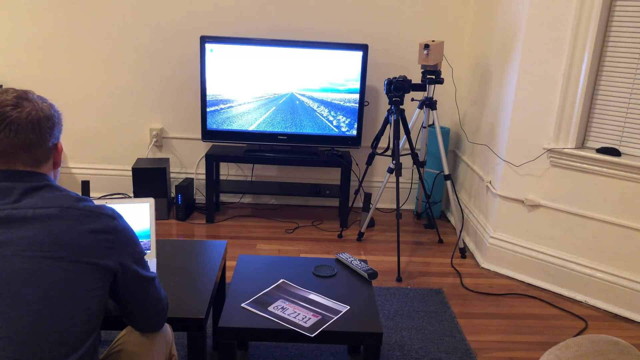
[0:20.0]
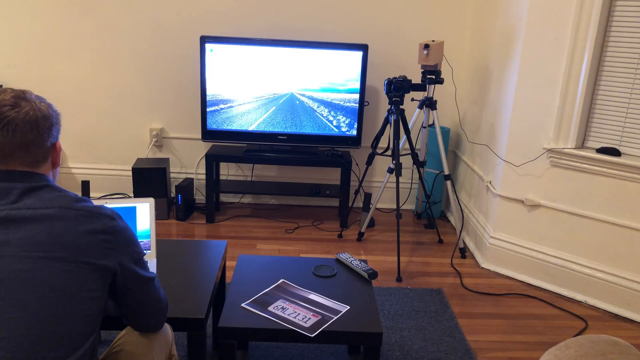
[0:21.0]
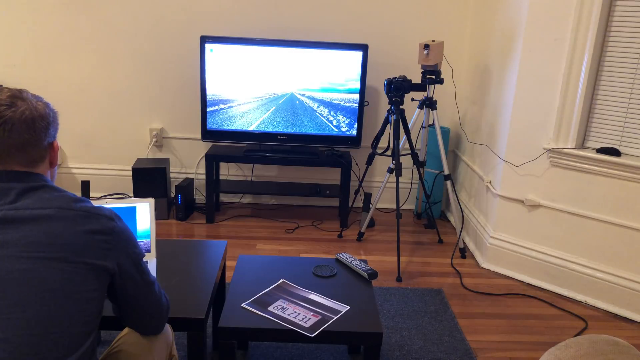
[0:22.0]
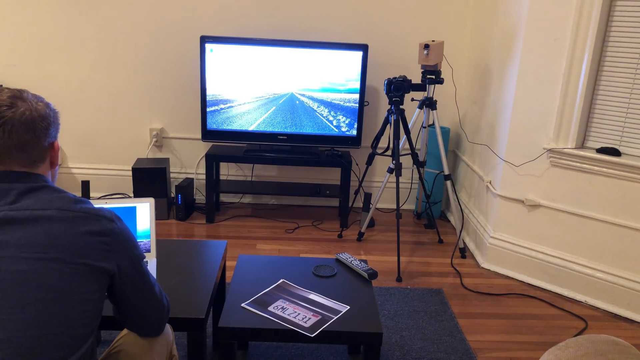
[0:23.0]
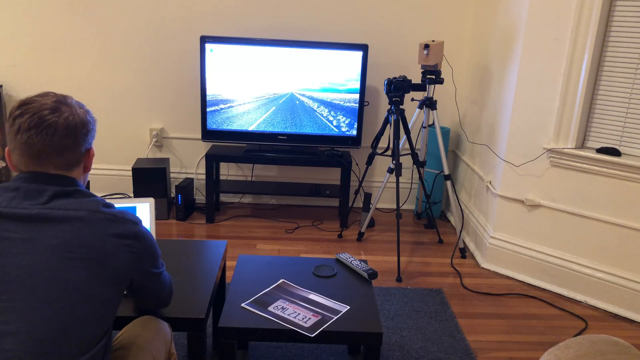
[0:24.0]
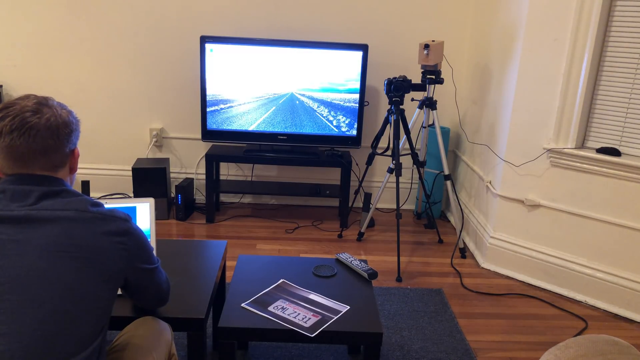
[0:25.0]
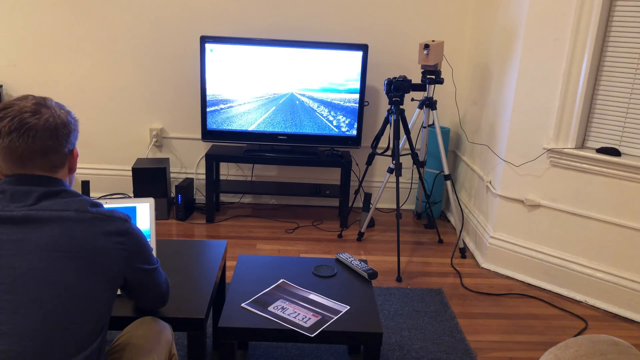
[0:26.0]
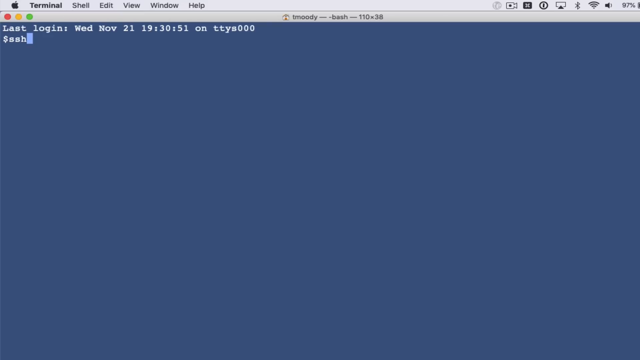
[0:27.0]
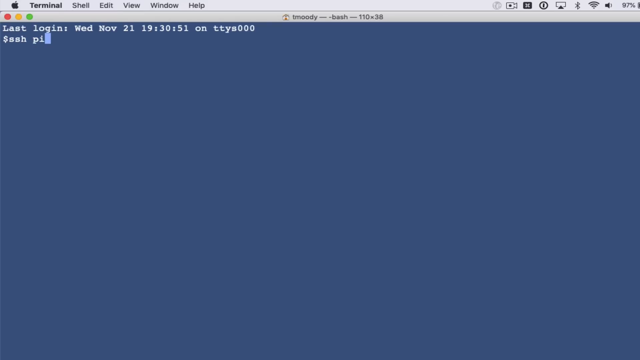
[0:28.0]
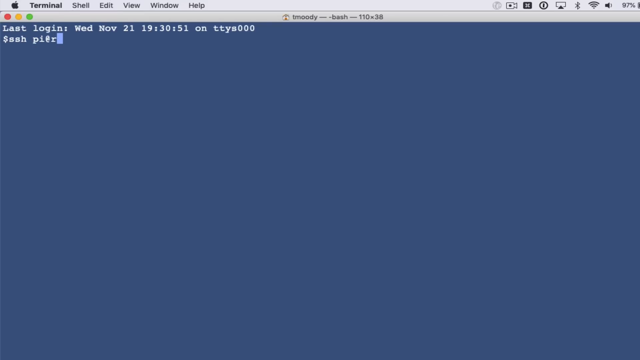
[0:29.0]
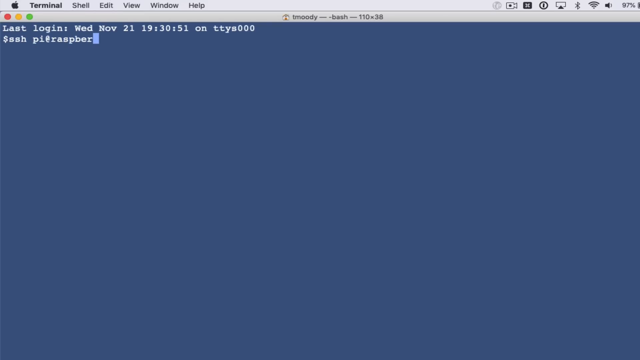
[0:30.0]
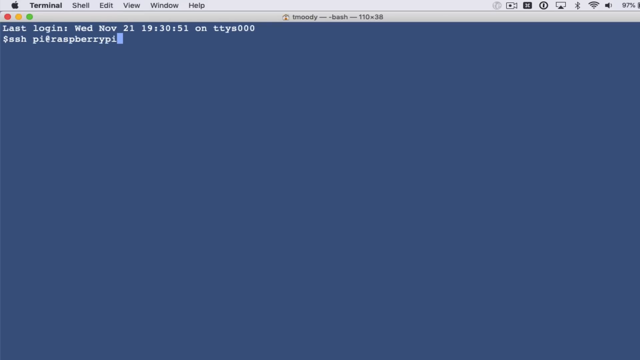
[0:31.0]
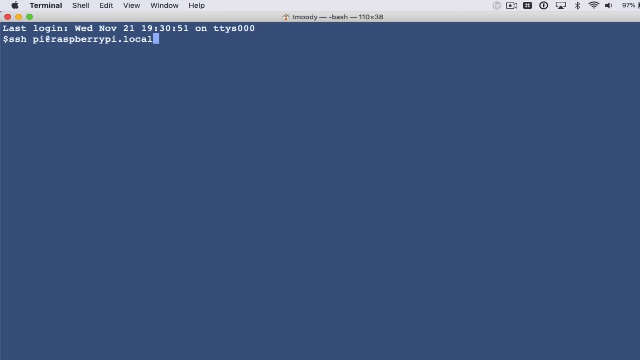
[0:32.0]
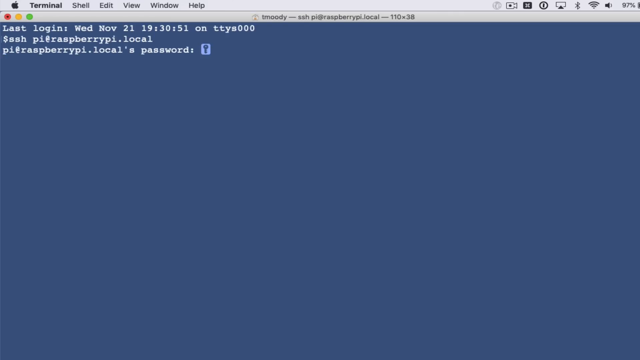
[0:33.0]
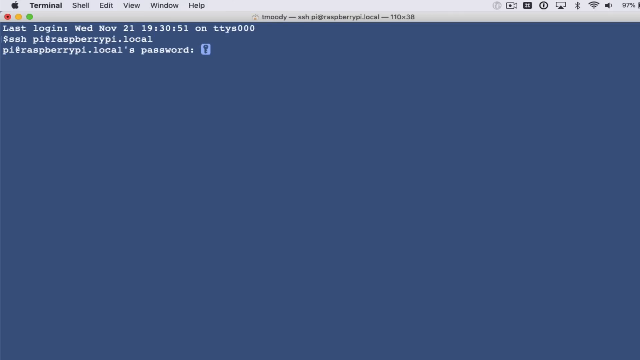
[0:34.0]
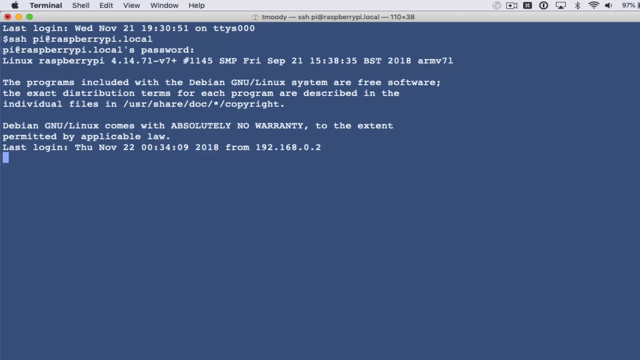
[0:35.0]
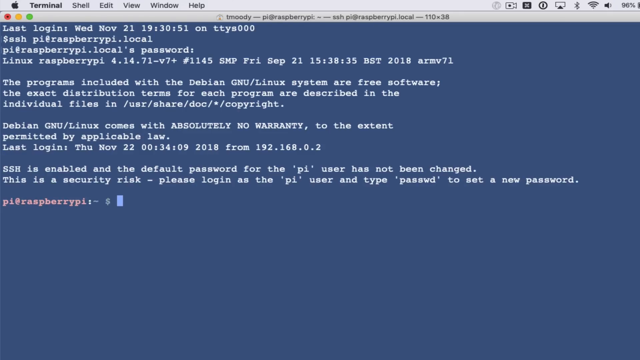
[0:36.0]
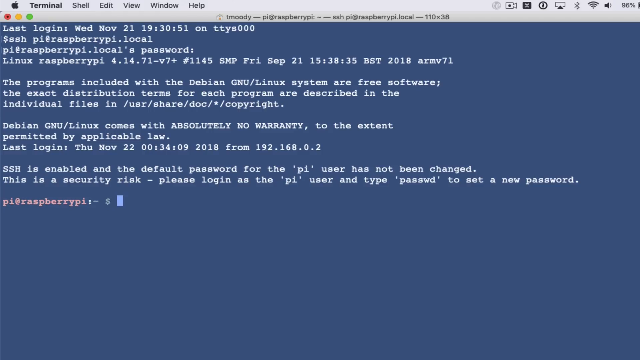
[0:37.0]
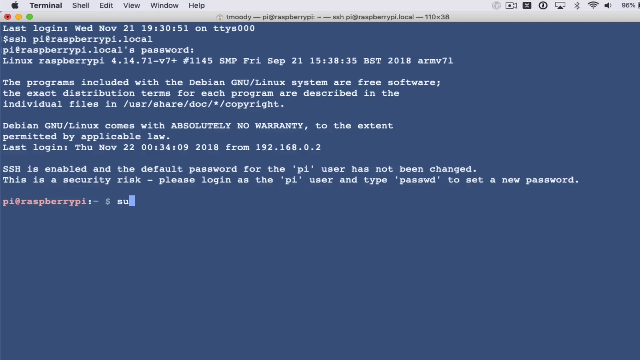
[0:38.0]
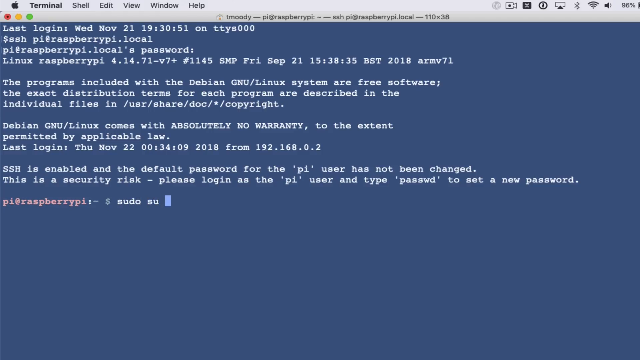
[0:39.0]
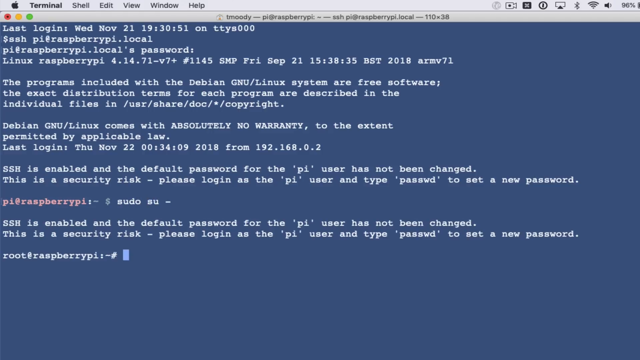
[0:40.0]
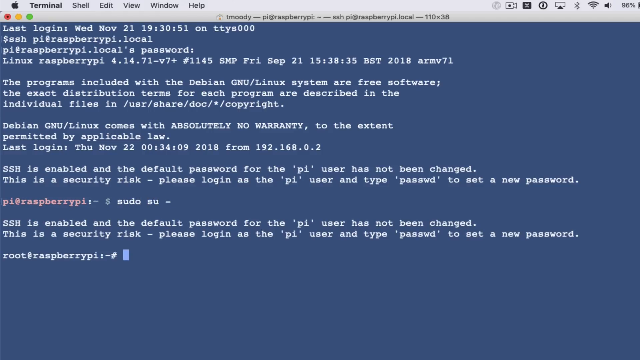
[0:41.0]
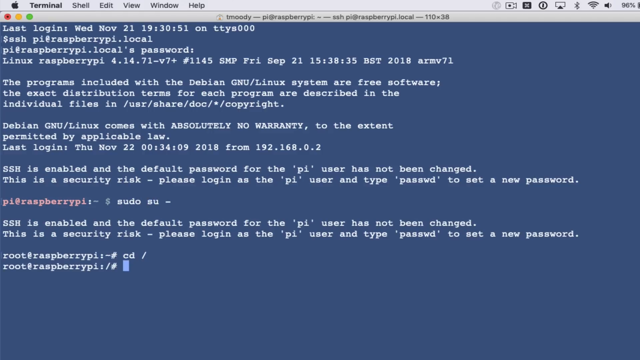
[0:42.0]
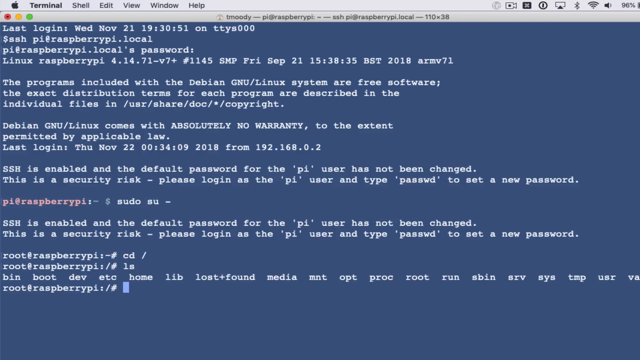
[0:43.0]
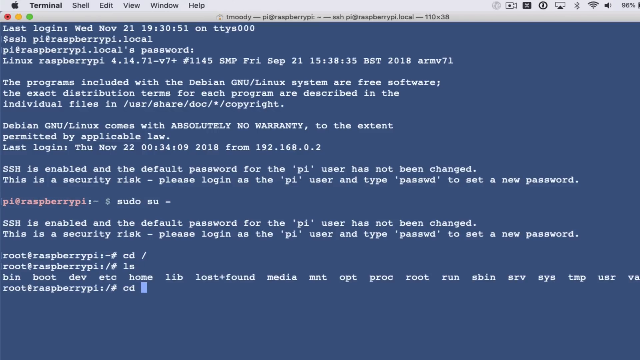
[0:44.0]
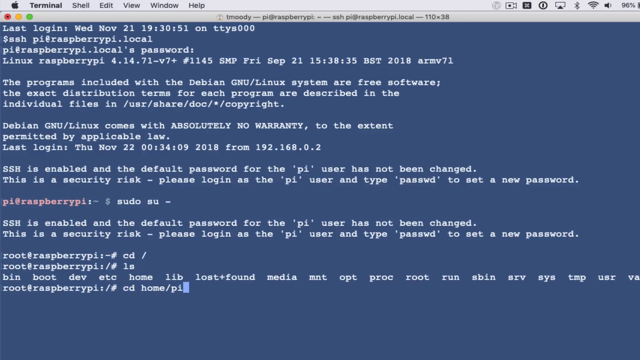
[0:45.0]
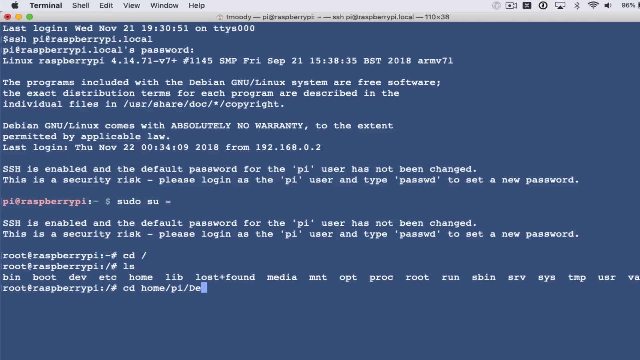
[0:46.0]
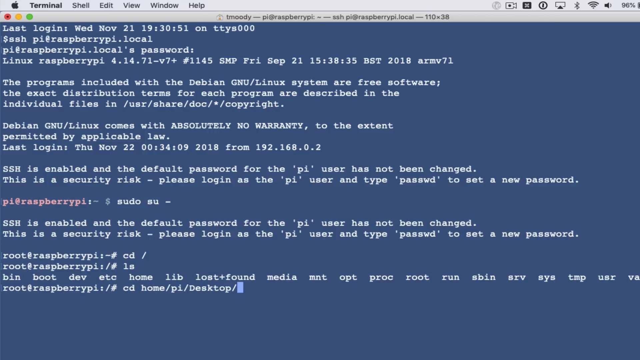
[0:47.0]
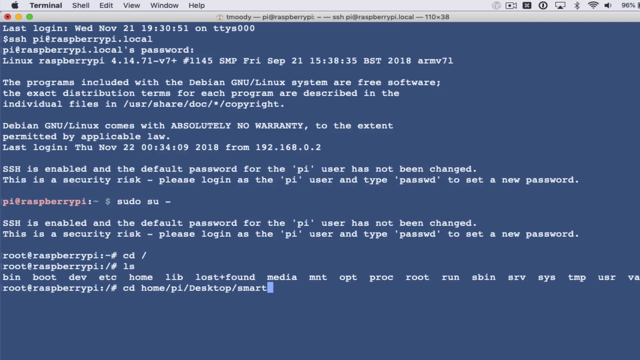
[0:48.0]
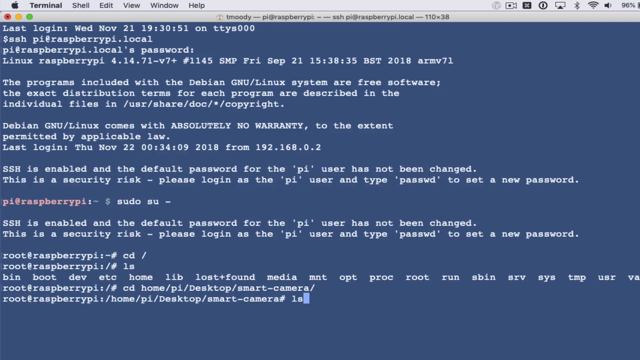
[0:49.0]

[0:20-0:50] The man types on his computer. He goes to a page that says "last login" with the date November 21st, and types in a local Linux password for a Raspberry Pi system. Text appears about a default password for Pi that has not been changed and asks to log in with a provided password. The setup is apparently a local Raspberry Pi server that his surveillance system may be based on, which he is accessing through his computer. He is on an Apple computer and is working in the terminal, visible in the top left-hand corner. The laptop is on Wi-Fi and its battery is at 96%. The last login of the server is shown as Wednesday, November 21st at 19.30 am, and the Raspberry Pi local runs on a Linux system.